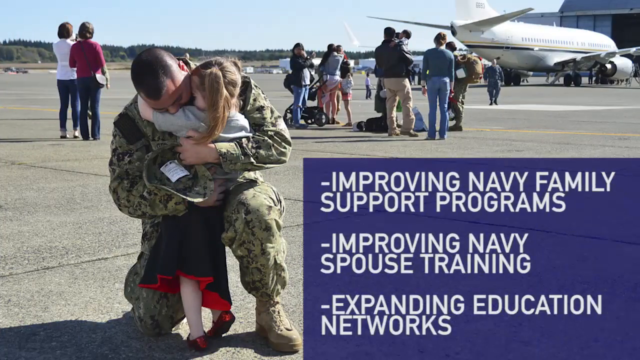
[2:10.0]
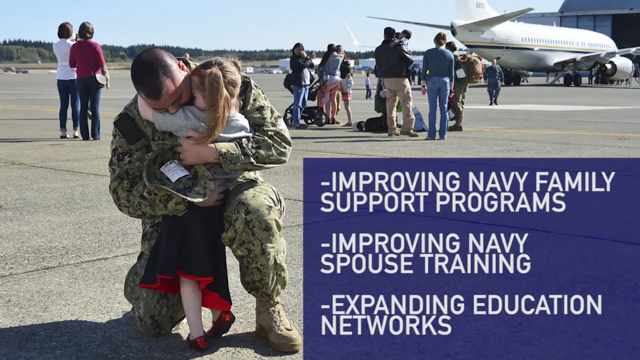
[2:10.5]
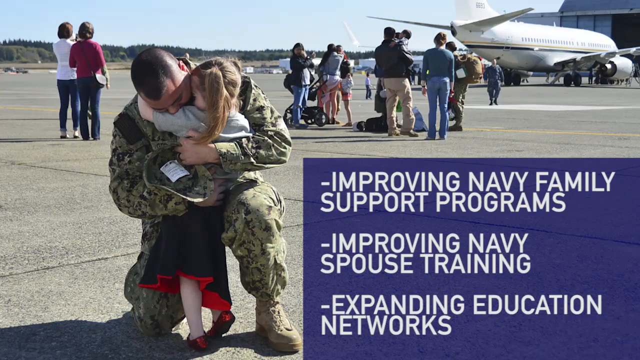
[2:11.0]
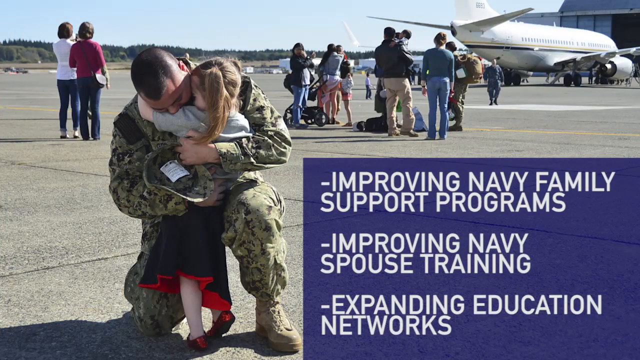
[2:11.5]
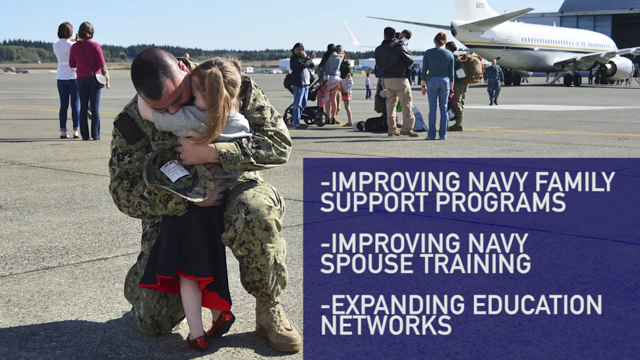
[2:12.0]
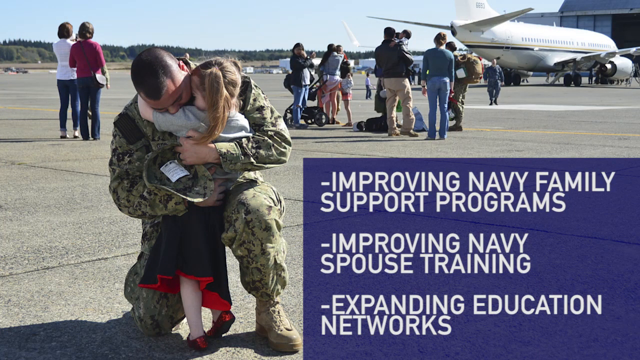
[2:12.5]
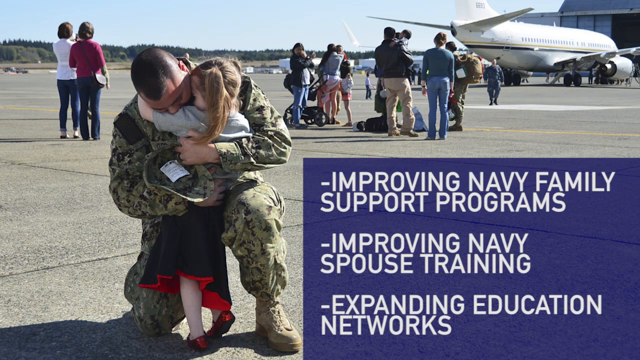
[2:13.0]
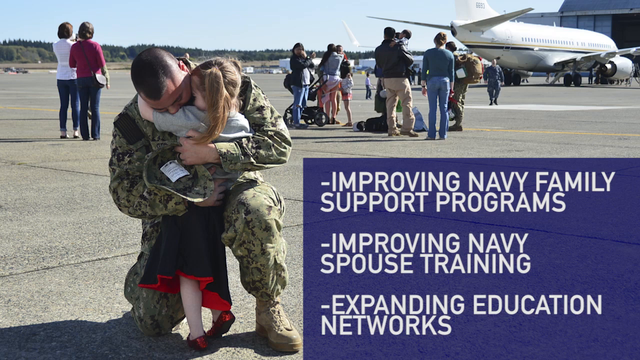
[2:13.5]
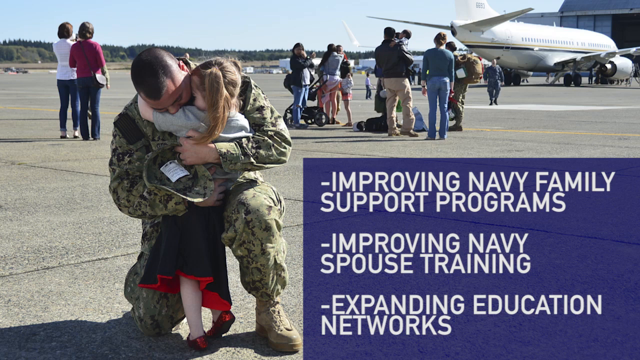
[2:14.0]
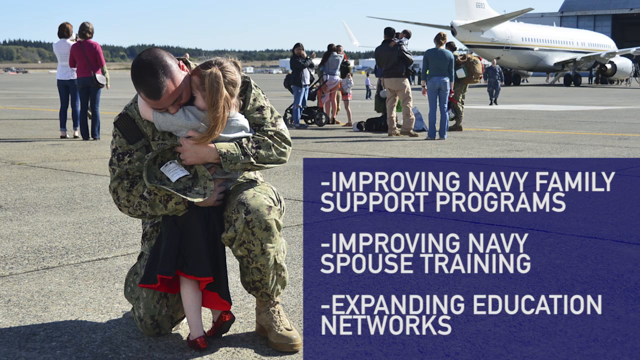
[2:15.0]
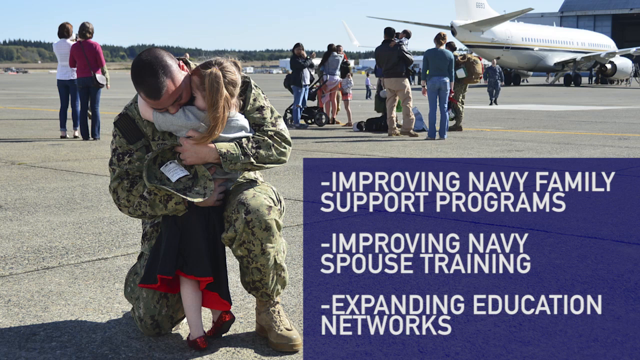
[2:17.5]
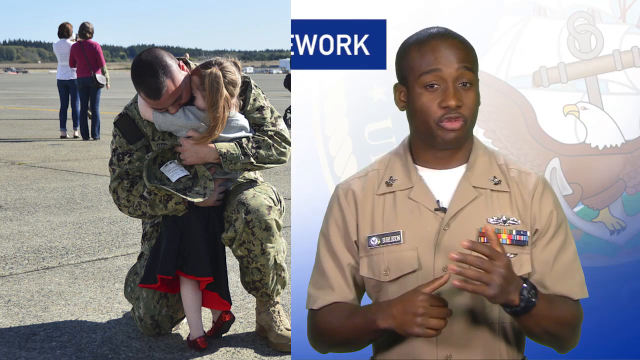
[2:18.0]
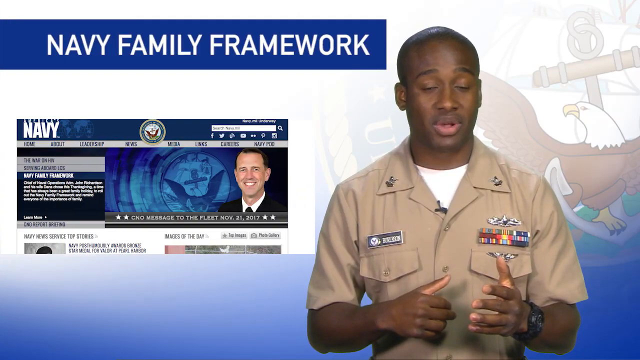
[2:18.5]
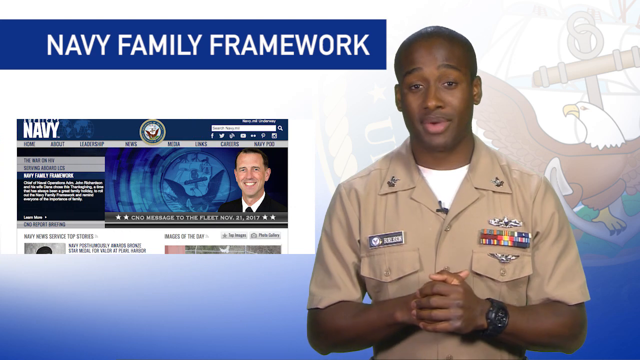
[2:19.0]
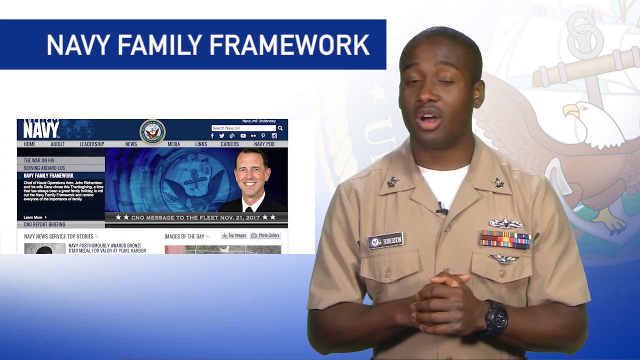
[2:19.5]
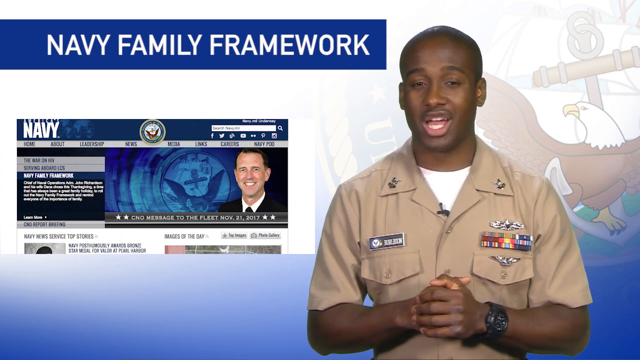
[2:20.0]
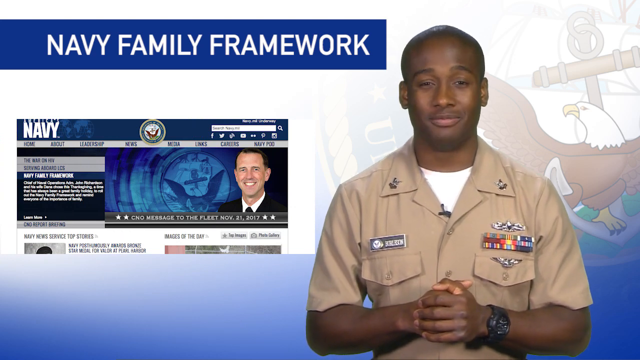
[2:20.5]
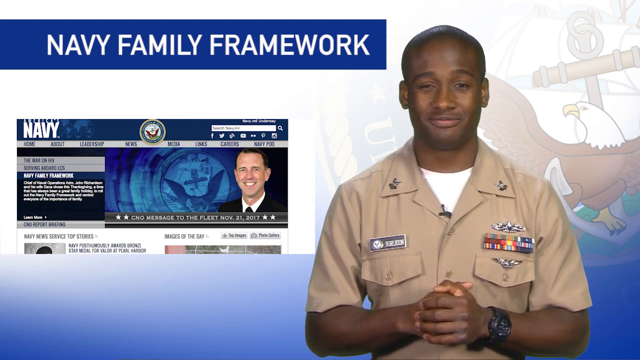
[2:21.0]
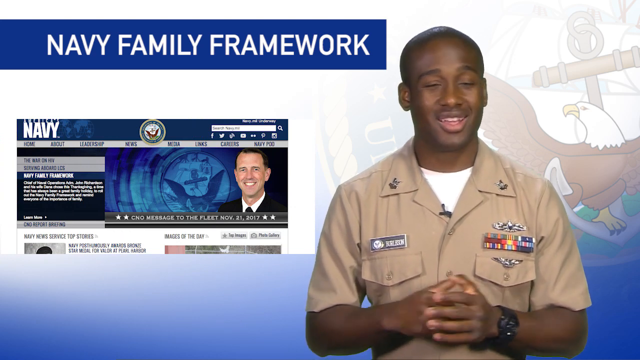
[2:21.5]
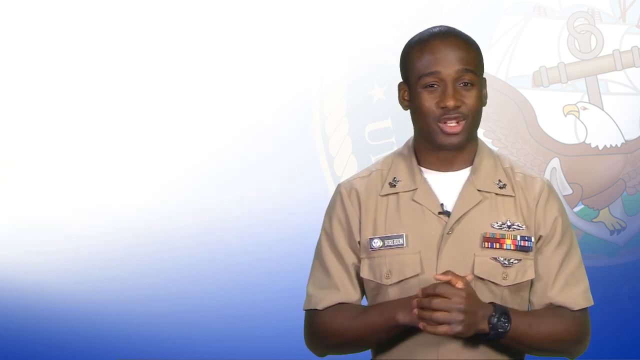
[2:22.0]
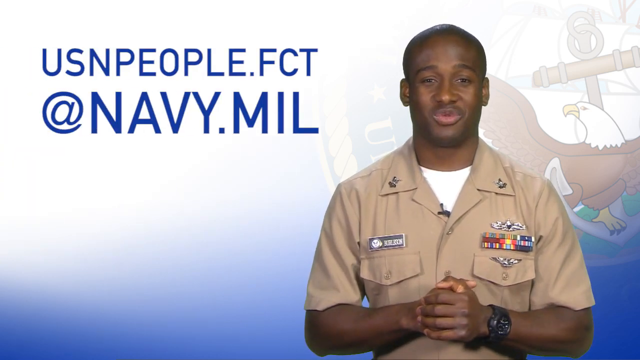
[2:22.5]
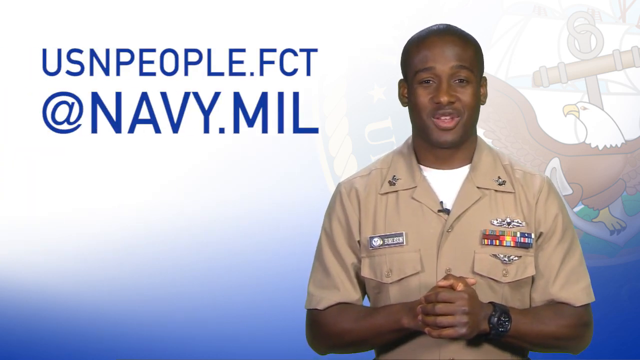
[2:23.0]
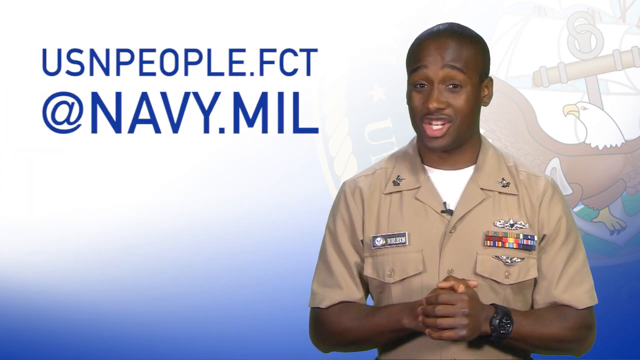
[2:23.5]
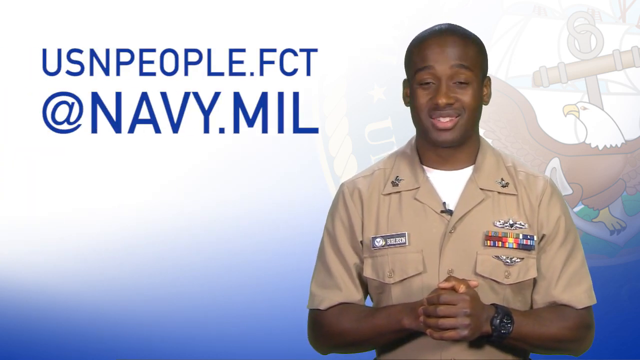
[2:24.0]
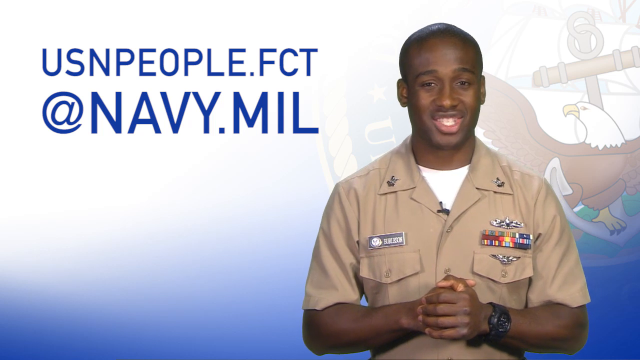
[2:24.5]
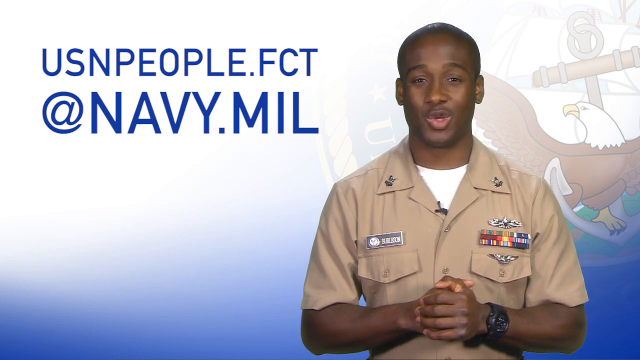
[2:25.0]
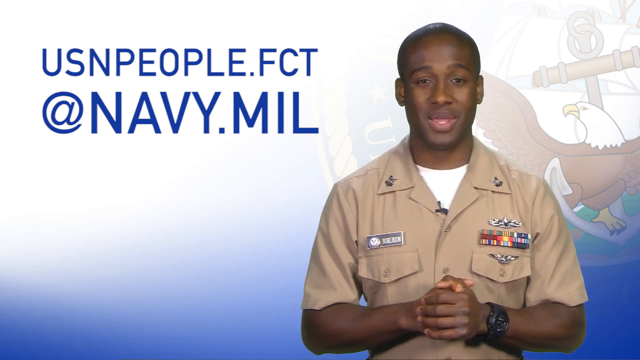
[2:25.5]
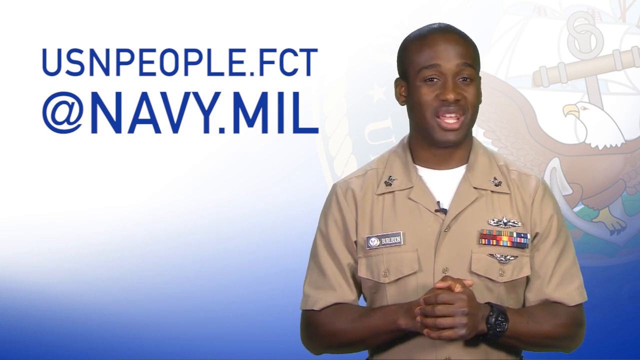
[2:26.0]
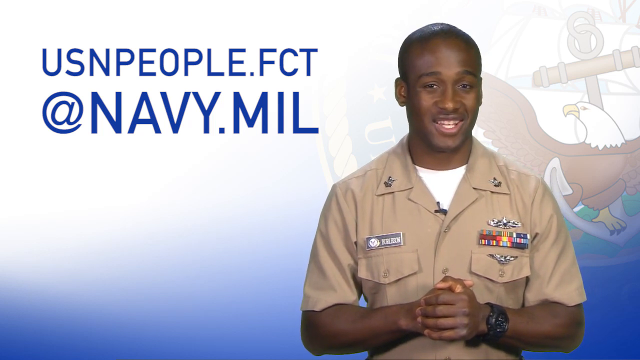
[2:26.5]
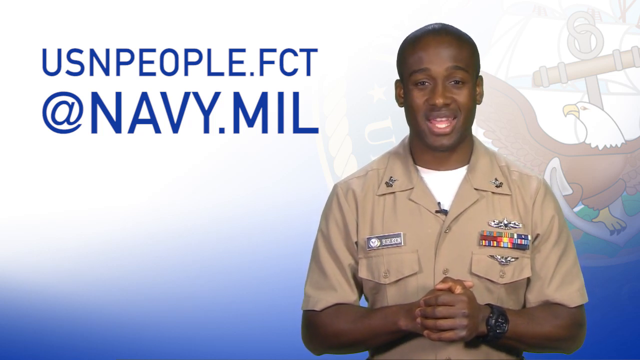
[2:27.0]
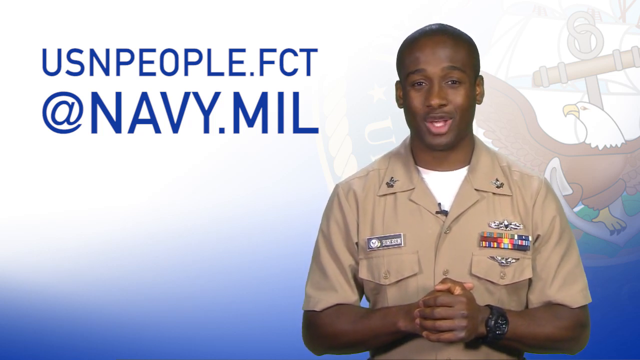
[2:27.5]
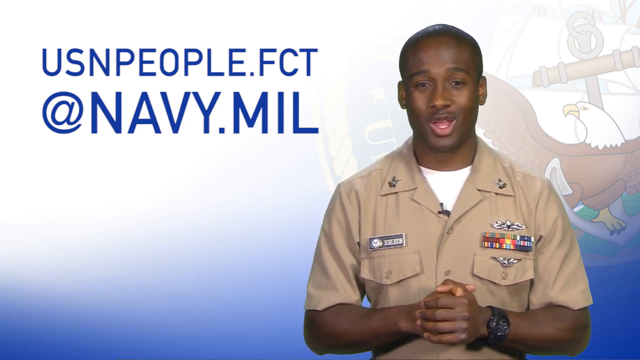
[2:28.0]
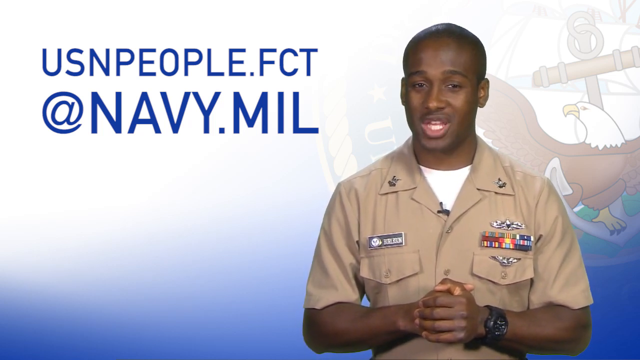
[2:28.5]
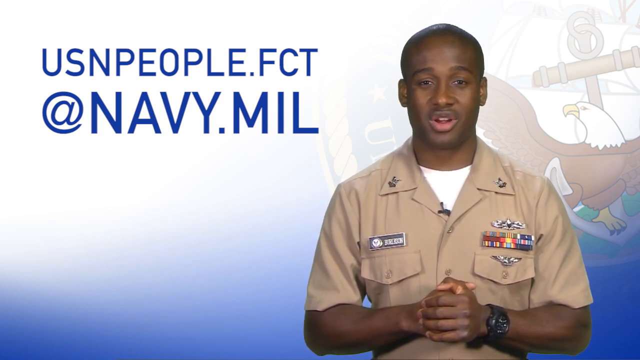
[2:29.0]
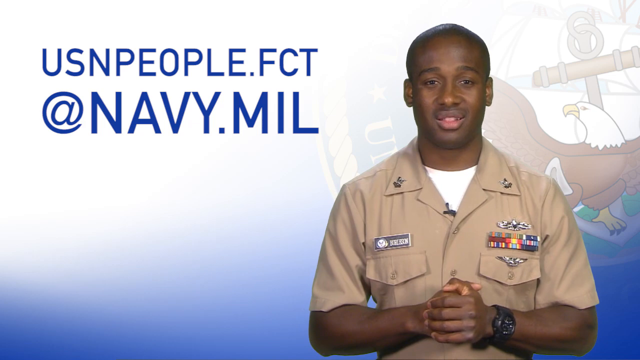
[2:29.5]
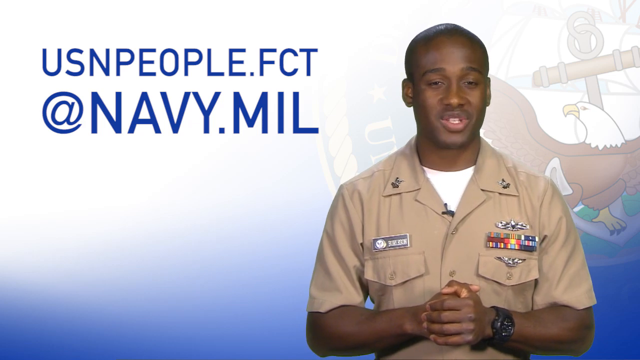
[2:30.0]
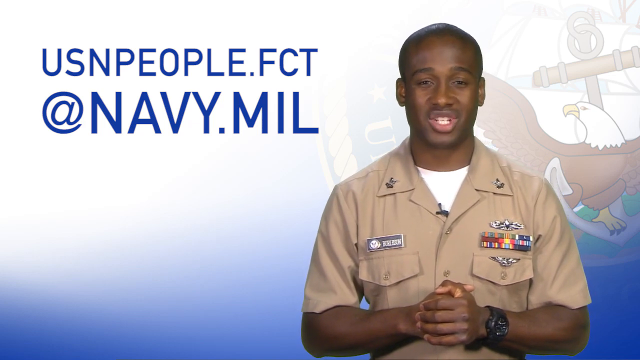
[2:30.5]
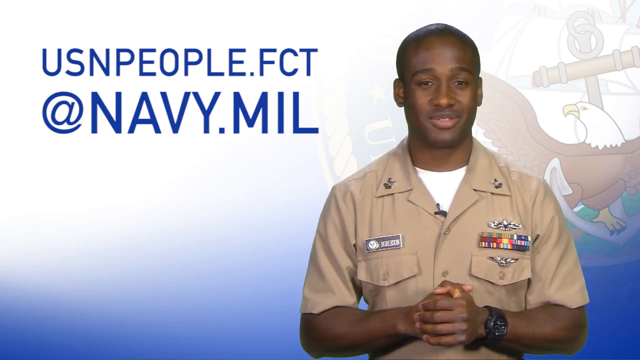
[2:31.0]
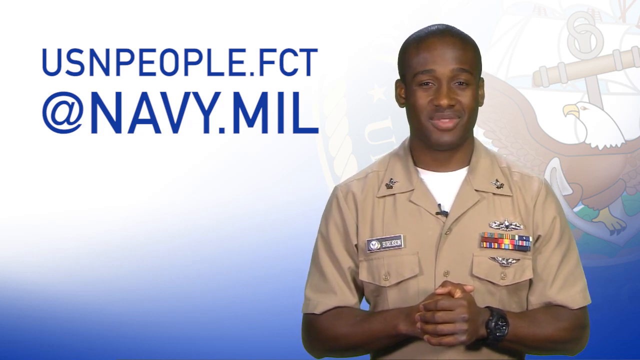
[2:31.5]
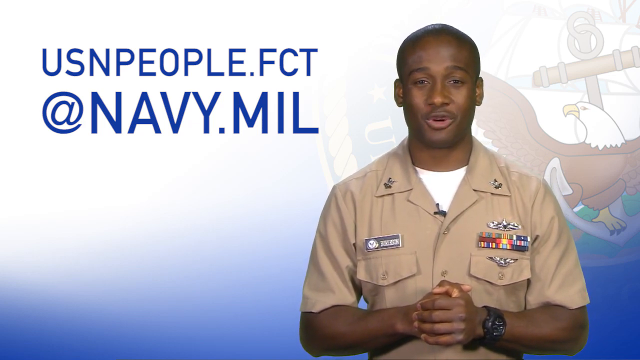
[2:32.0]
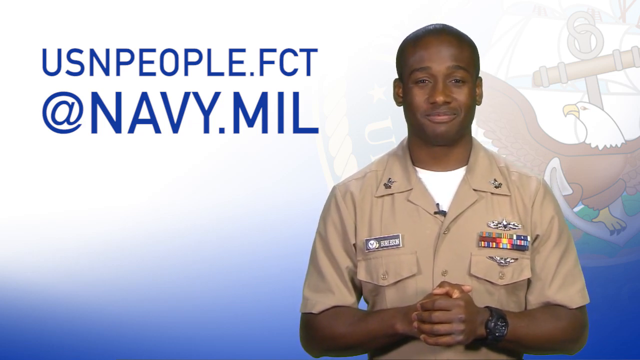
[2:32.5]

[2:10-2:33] A picture shows a flight that has just arrived; the aircraft is white with a black and gold strip on its body, and families are waiting for their Navy students. One soldier is leaning with one knee on the ground holding a young child wearing a grey t-shirt and a black skirt with red on the inside. They are hugging. Other families are in the background, some still waiting for their loved ones. Text on the bottom right says "Improving Navy Family Support Programs," "Improving Navy Spouse Training" and "Expanded Education Network." The video returns to the man who was talking, and a small web page about the Navy Family Framework appears. Finally an email appears: "usnpeople.fct.navy.mil".